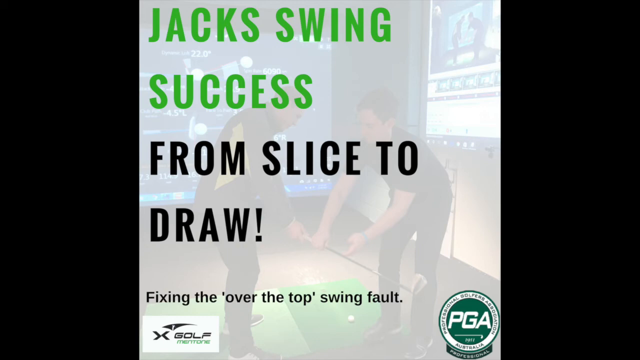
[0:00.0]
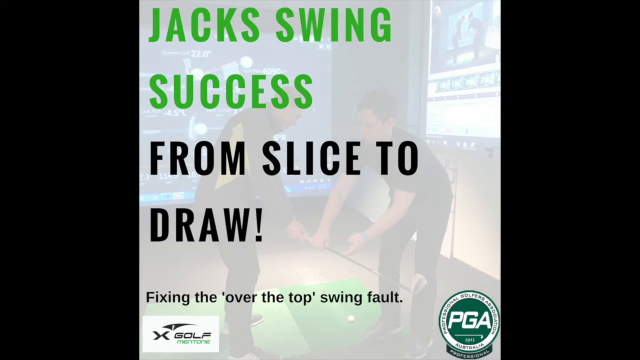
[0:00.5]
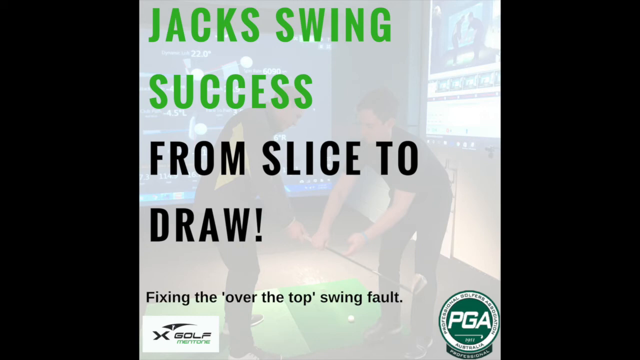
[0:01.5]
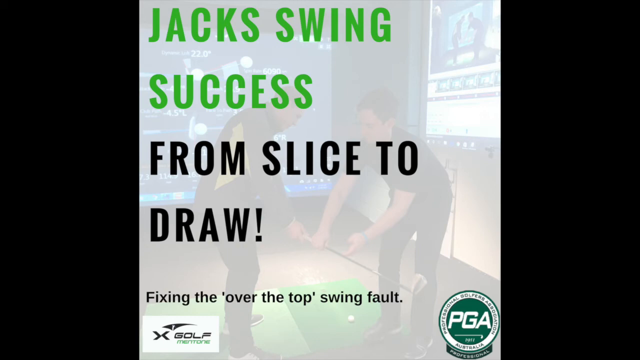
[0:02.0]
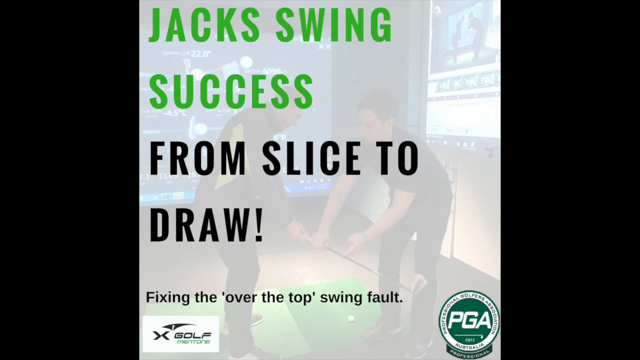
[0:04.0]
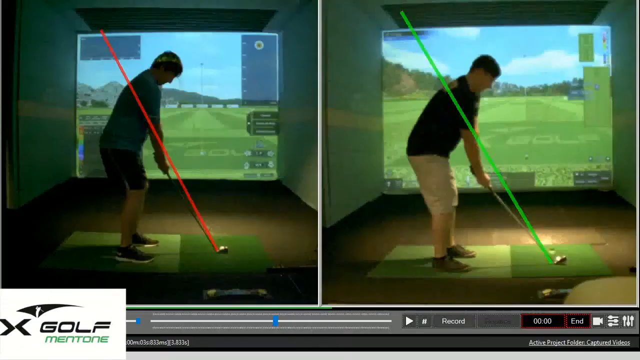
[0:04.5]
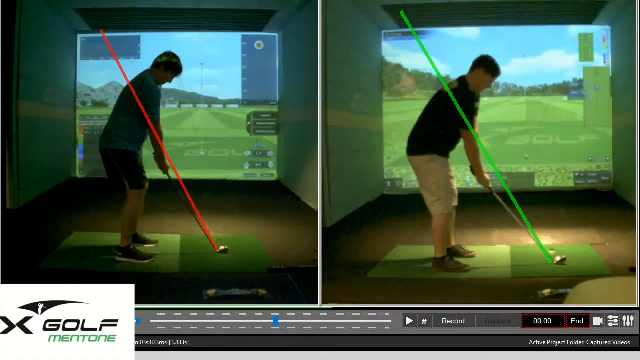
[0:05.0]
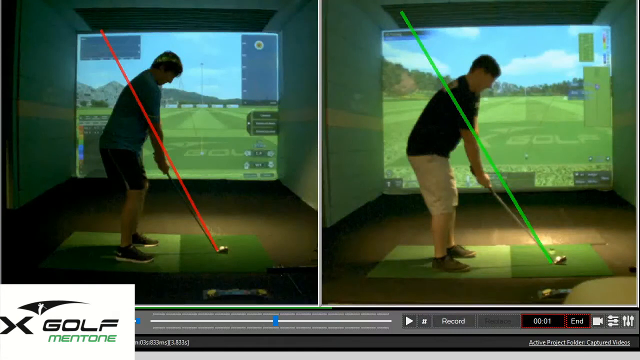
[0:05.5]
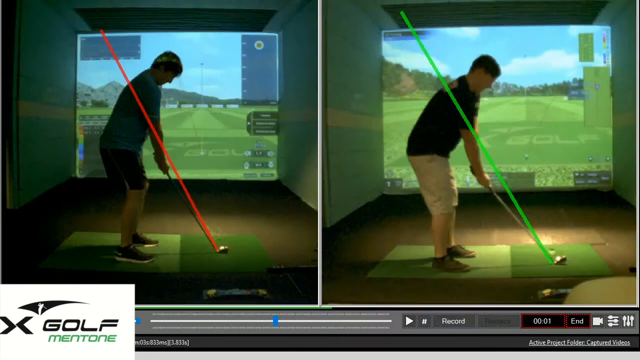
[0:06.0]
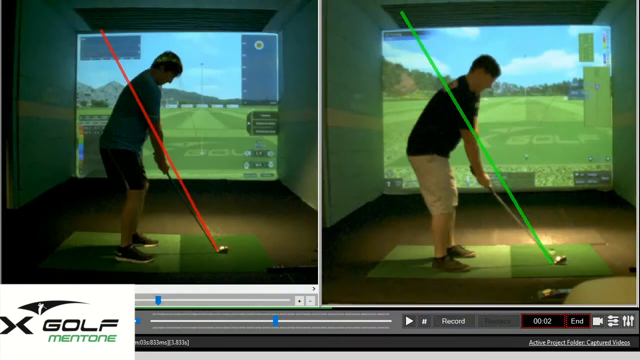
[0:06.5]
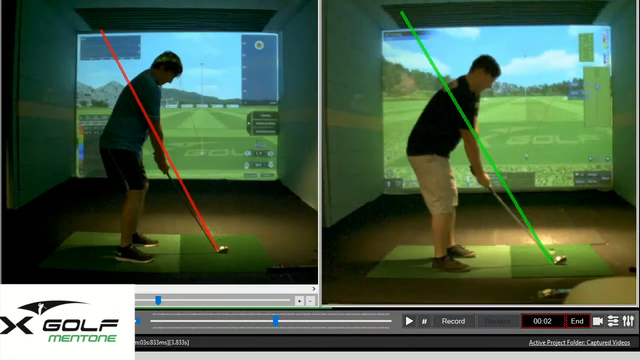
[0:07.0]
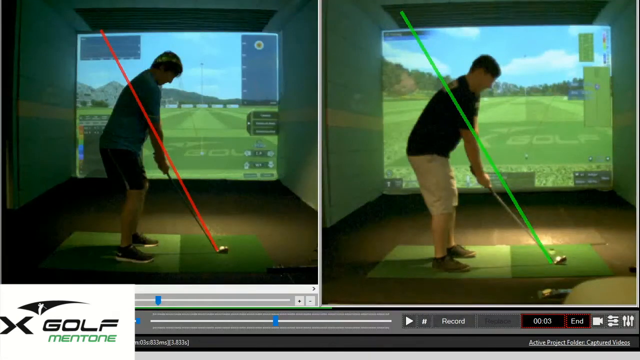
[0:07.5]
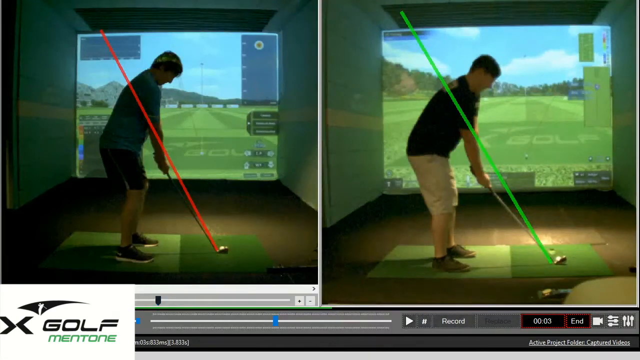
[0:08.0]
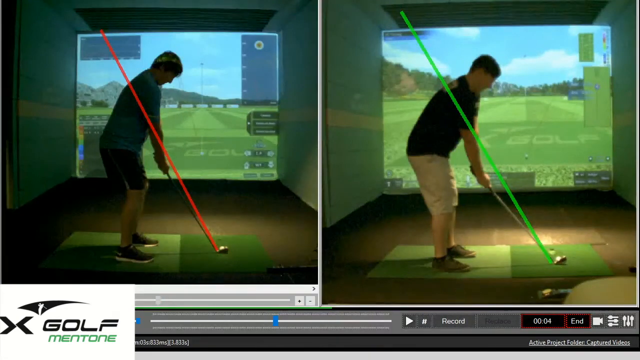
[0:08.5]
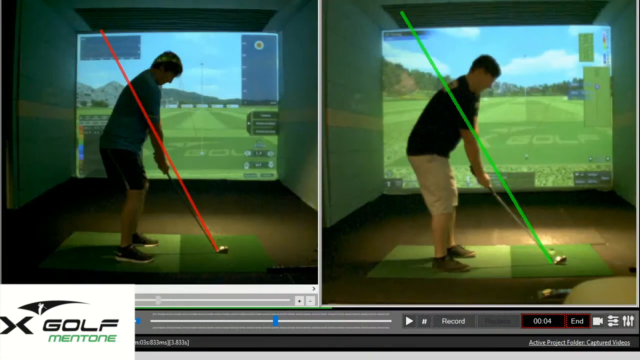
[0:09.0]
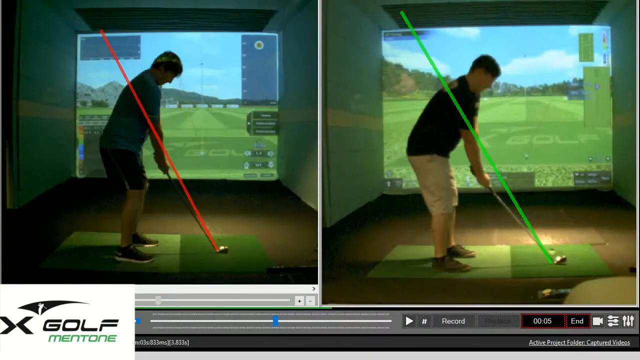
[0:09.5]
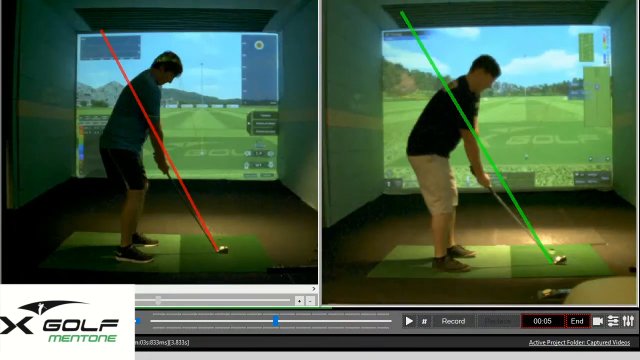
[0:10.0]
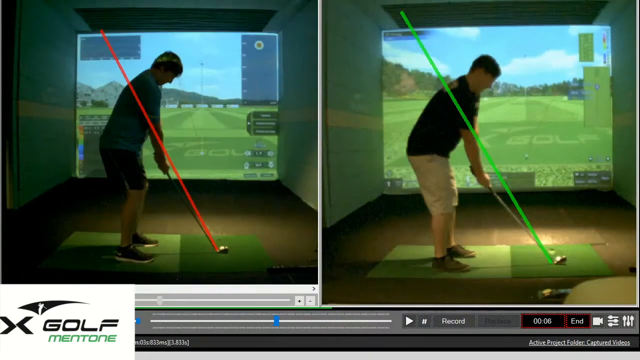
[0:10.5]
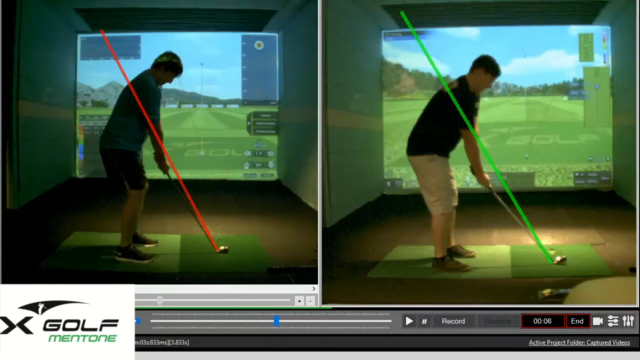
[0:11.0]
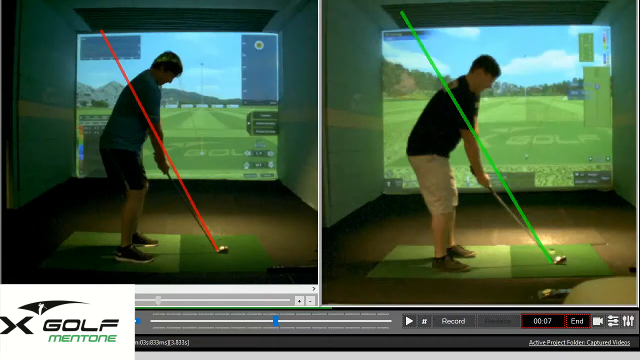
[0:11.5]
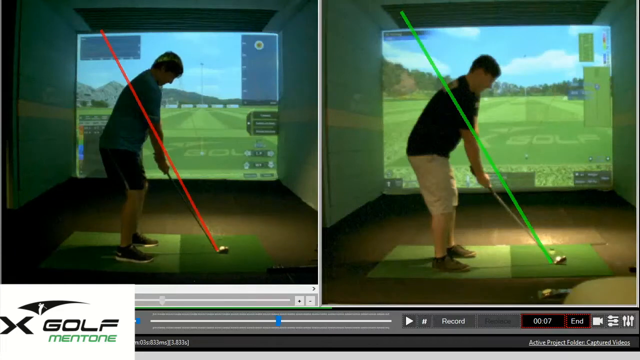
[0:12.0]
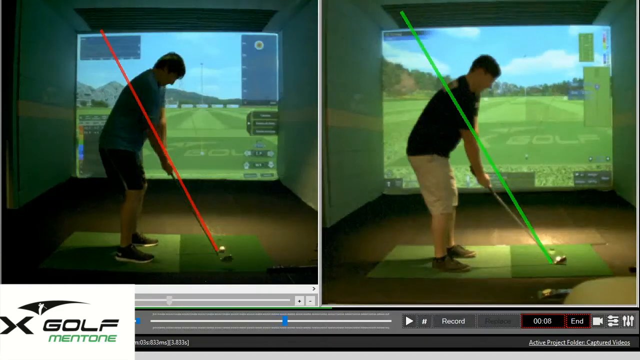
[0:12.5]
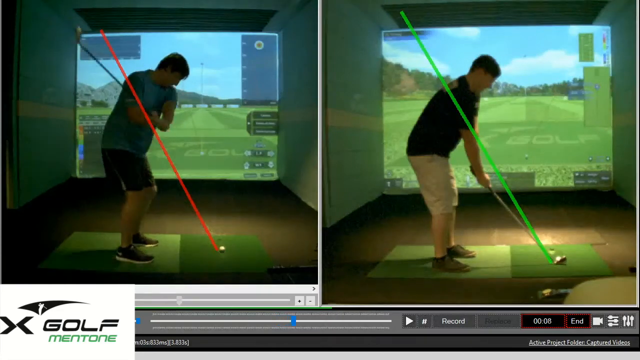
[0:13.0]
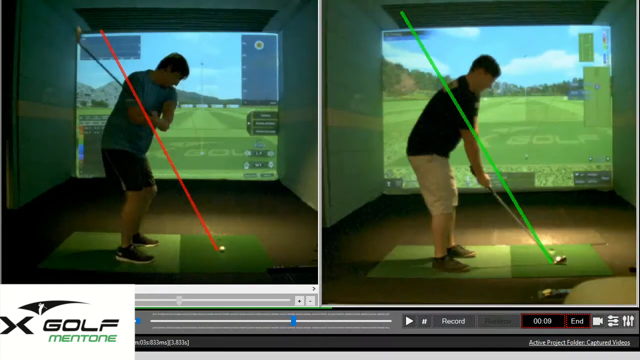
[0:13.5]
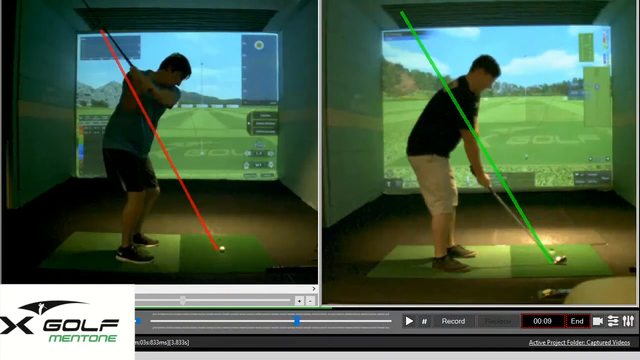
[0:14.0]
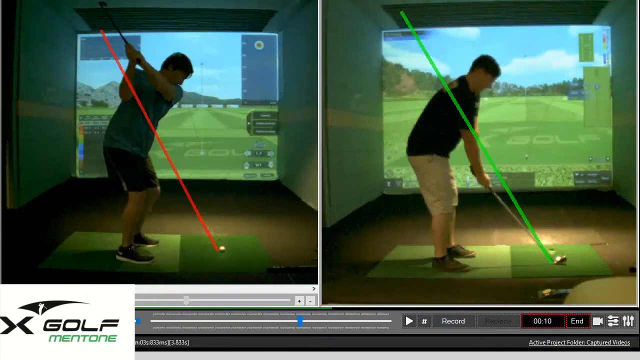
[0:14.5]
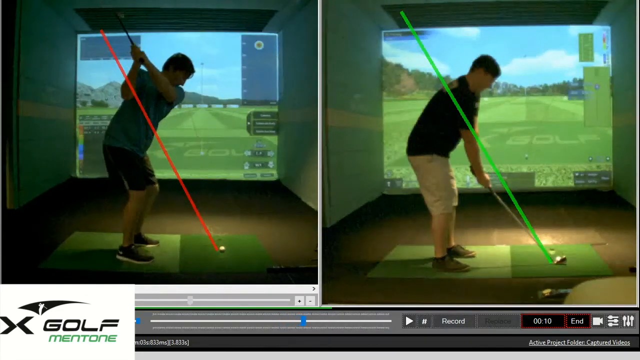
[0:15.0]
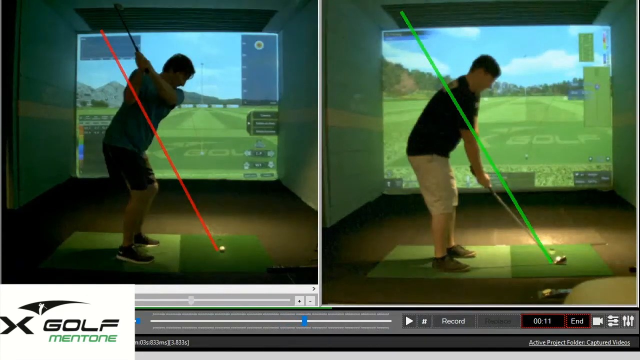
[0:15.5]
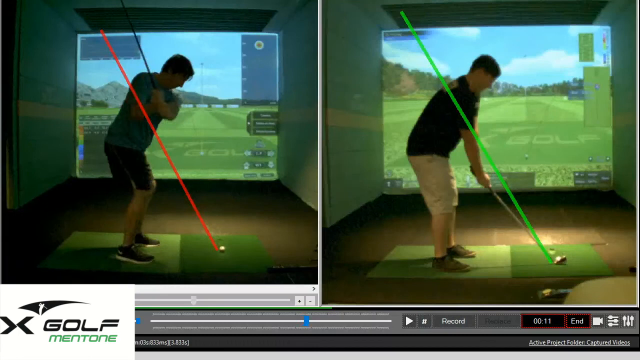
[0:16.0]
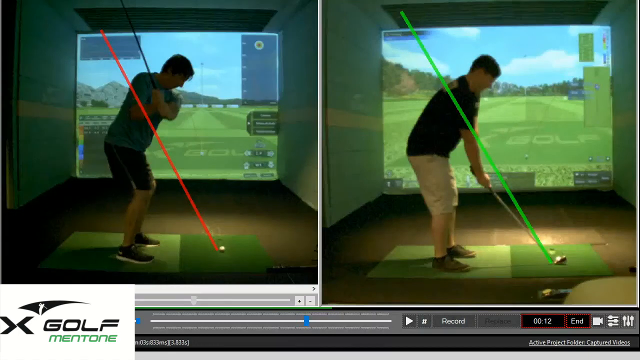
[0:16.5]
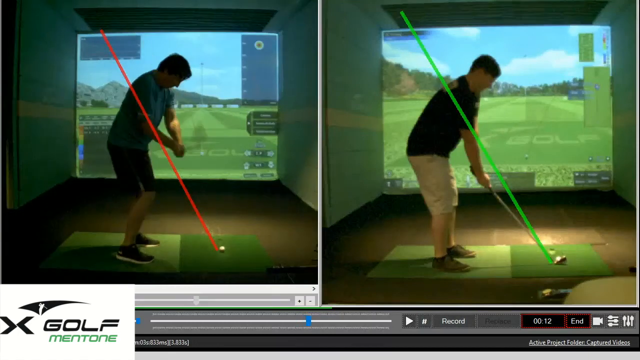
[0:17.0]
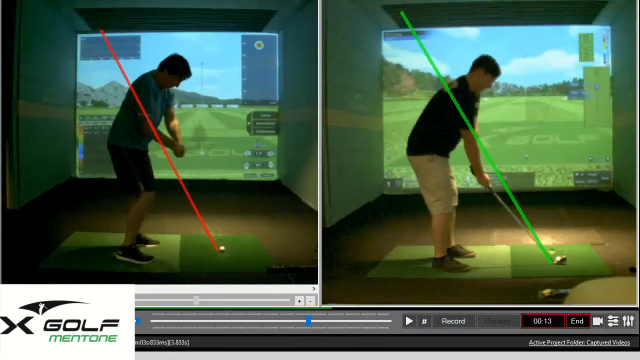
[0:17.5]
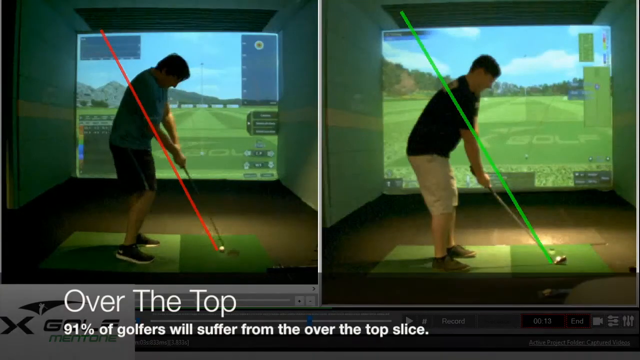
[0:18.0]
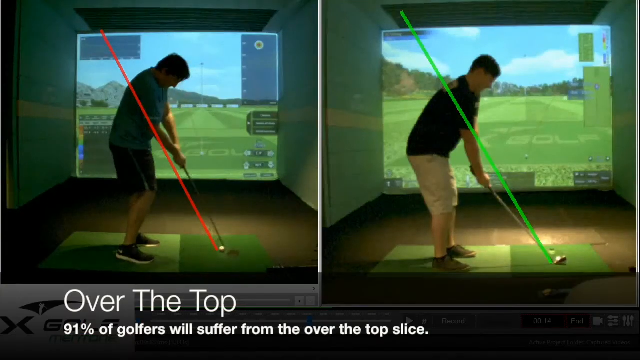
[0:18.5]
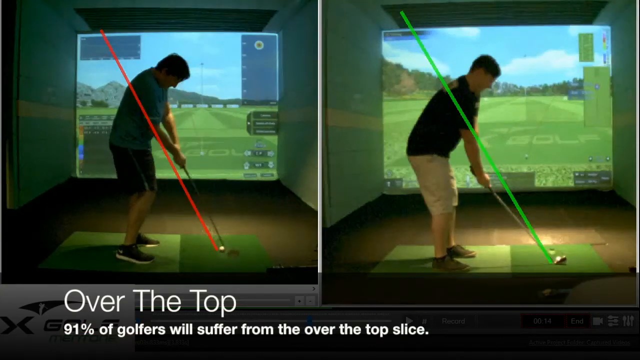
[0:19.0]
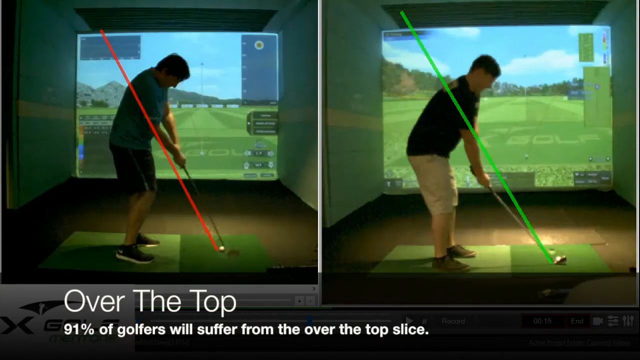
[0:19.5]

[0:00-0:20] This is an ad for a product for golfers. The title reads "Jack's Swing Success, from slice to draw, fixing the over-the-top swing fault," and the PGA logo is in the lower right-hand corner. Next comes what looks like it could be an app showing two men playing golf on a split screen. On the left, a man is playing golf with a red line going through the graphic; on the right, a man holds a golf club with a green line going across it. The red line apparently marks the left image as the wrong way to hold the golf club, and the green line apparently marks the right image as the right way.